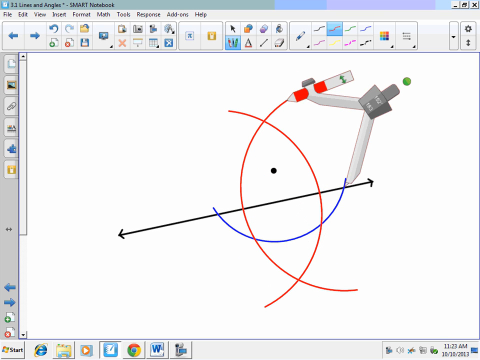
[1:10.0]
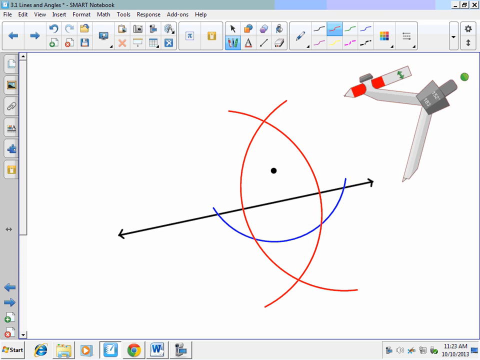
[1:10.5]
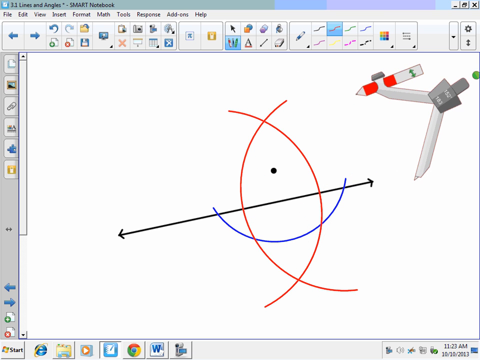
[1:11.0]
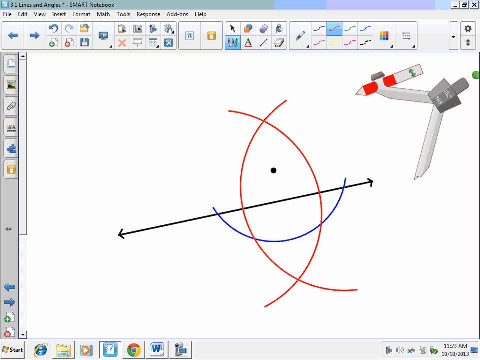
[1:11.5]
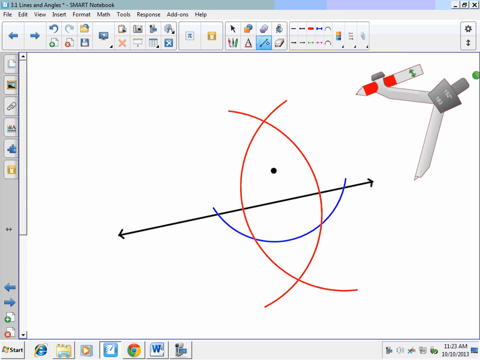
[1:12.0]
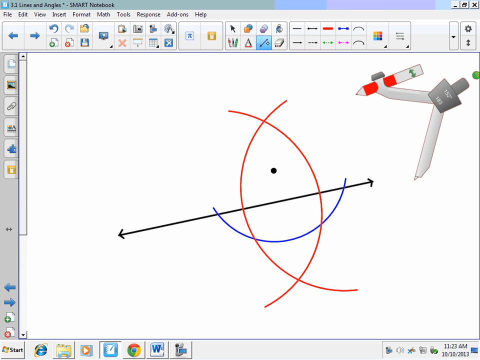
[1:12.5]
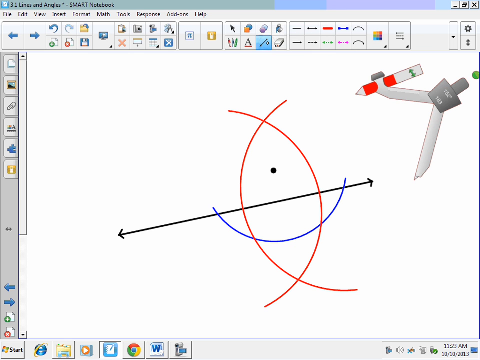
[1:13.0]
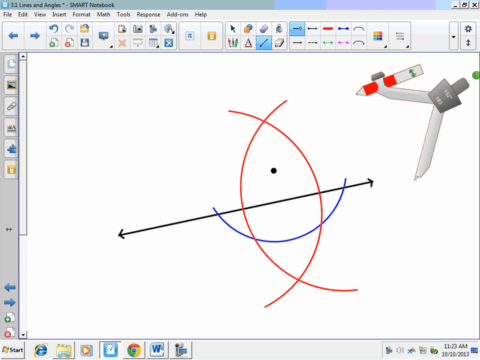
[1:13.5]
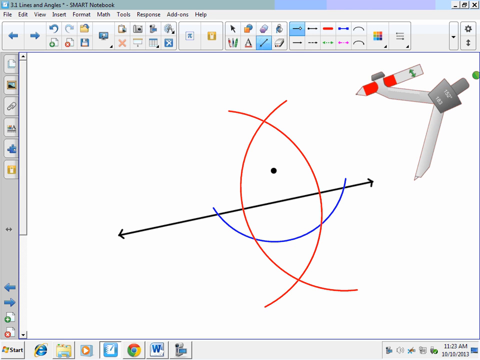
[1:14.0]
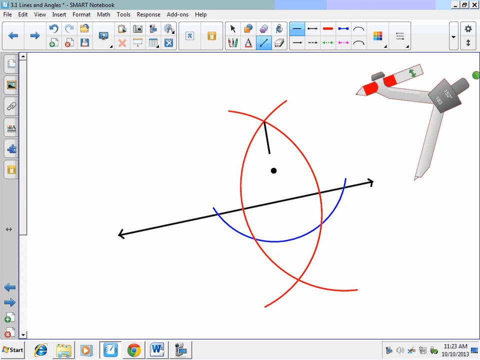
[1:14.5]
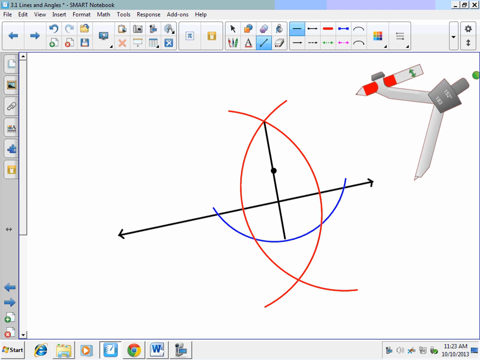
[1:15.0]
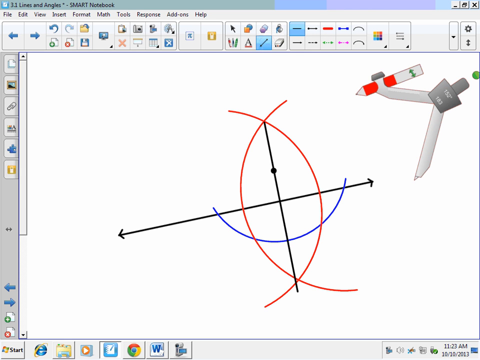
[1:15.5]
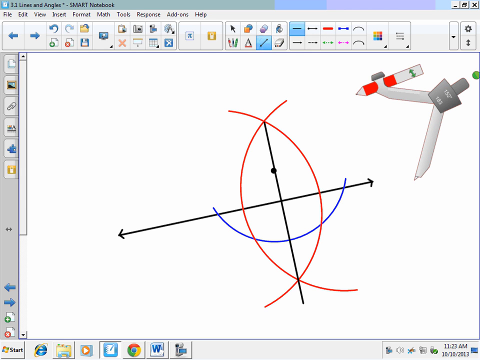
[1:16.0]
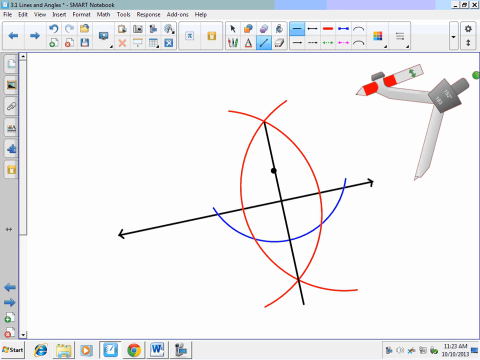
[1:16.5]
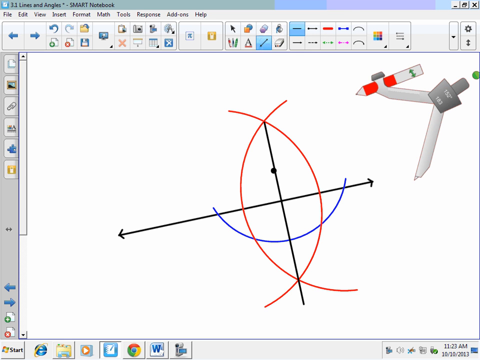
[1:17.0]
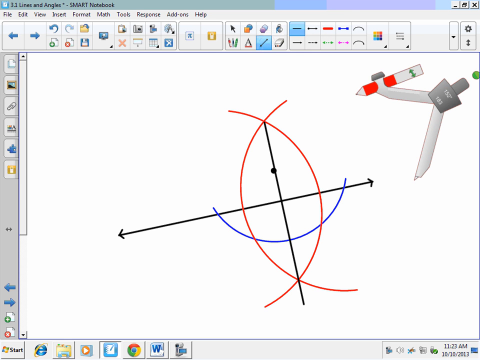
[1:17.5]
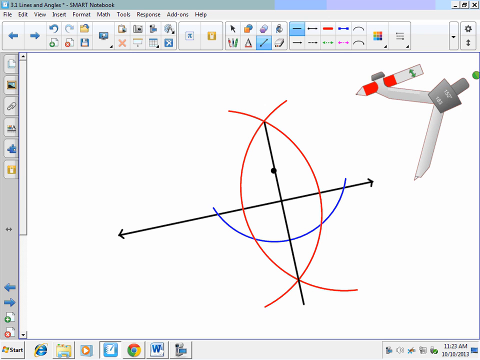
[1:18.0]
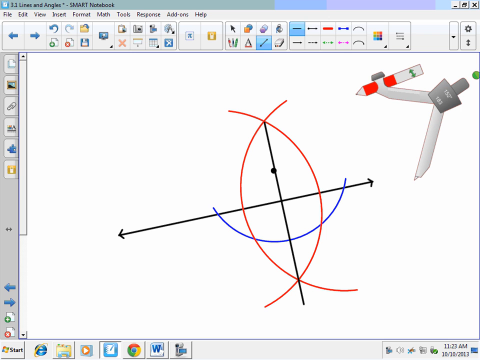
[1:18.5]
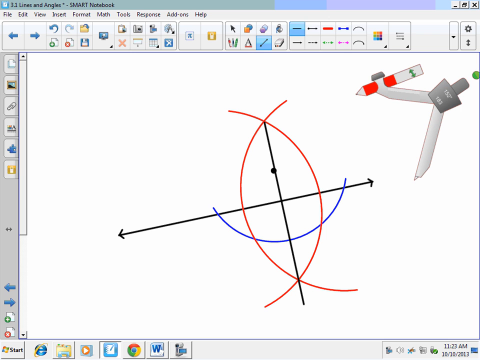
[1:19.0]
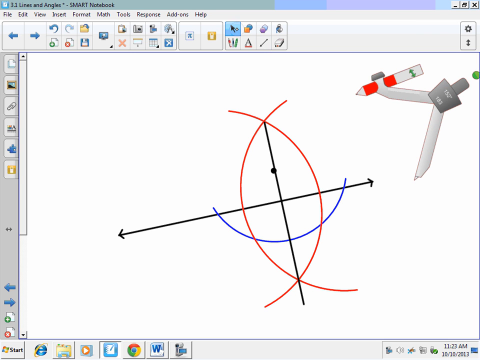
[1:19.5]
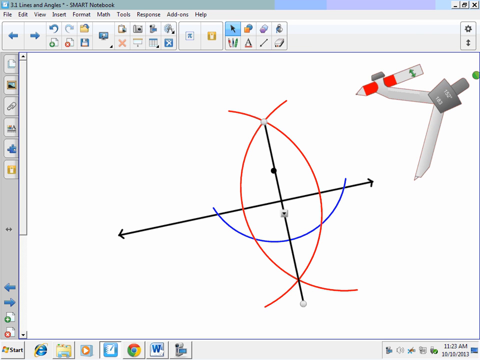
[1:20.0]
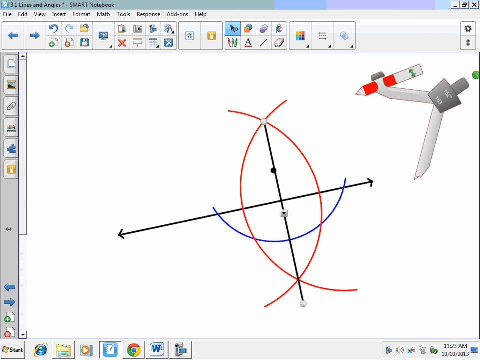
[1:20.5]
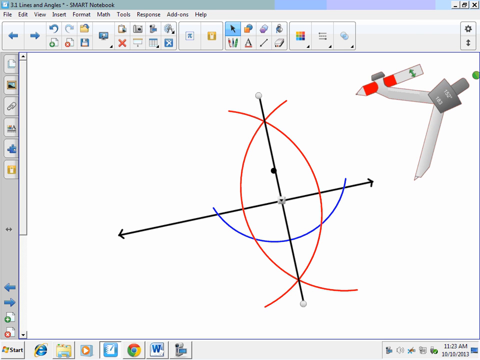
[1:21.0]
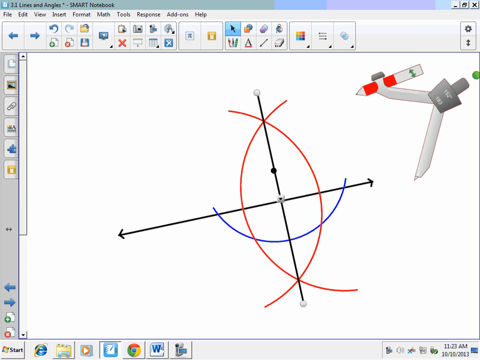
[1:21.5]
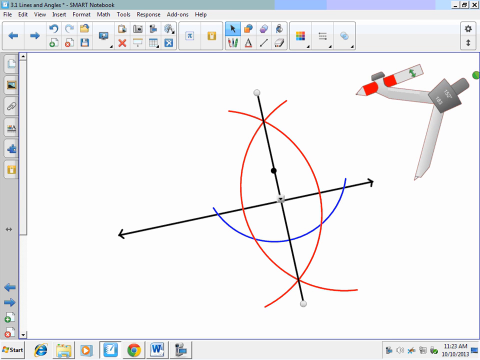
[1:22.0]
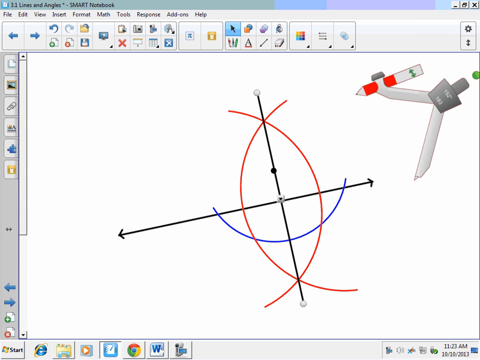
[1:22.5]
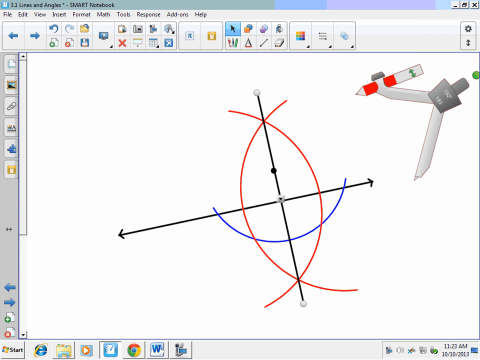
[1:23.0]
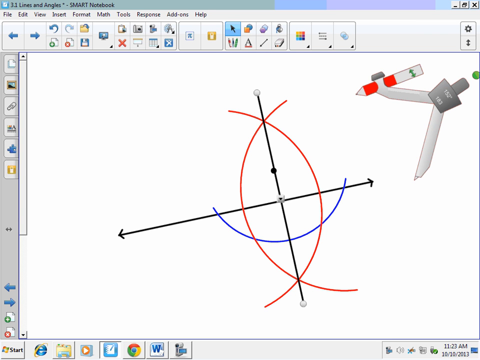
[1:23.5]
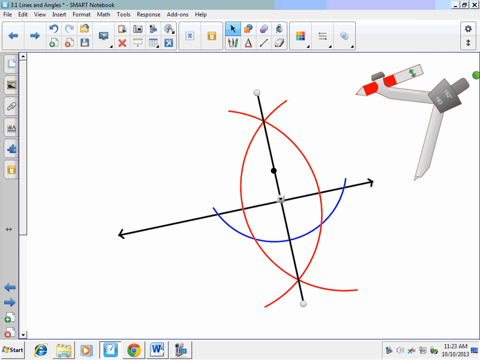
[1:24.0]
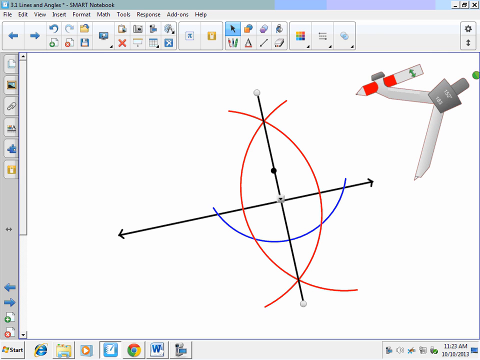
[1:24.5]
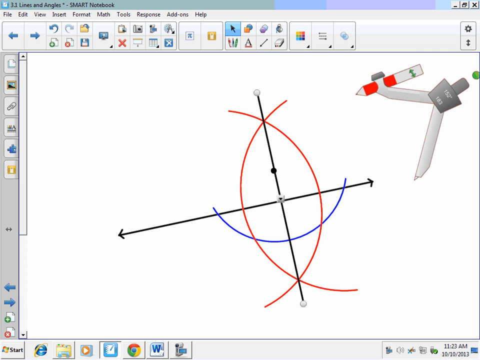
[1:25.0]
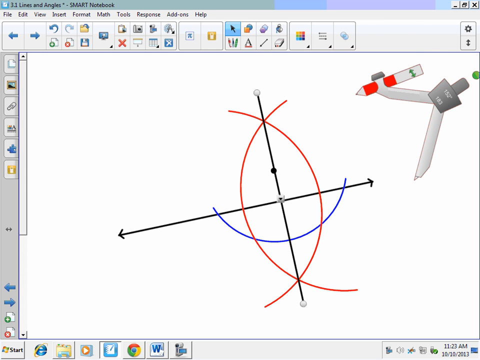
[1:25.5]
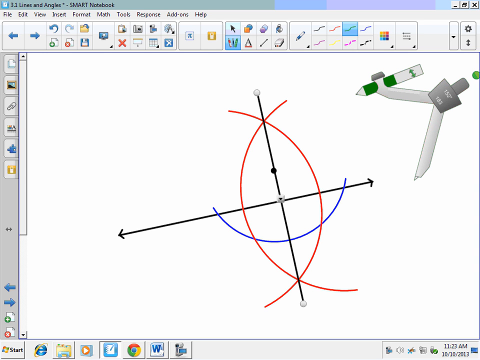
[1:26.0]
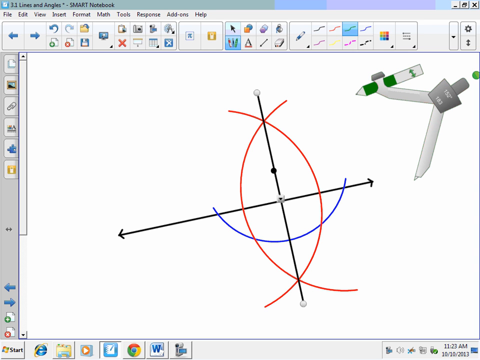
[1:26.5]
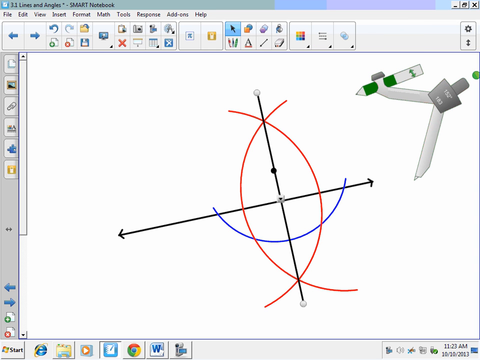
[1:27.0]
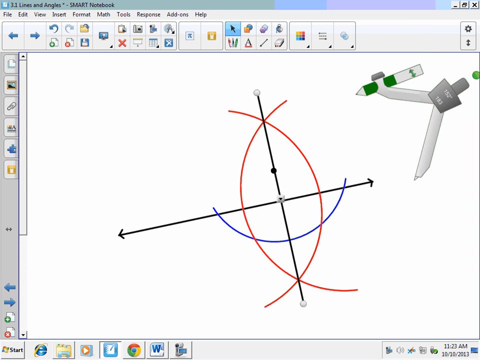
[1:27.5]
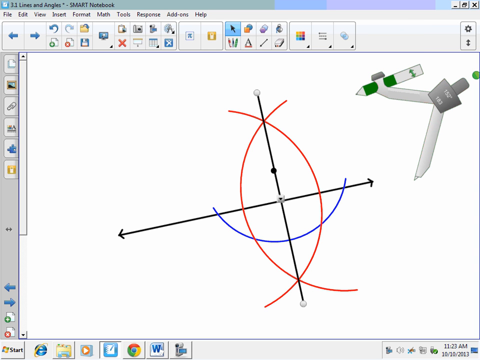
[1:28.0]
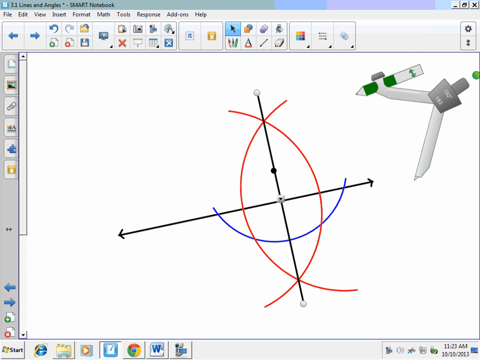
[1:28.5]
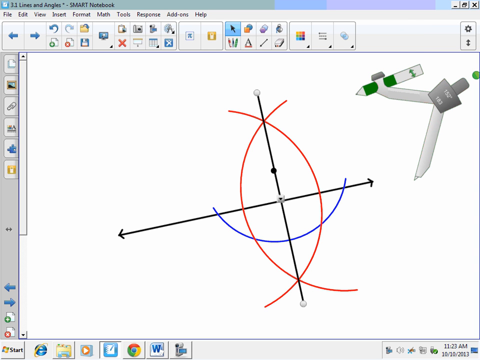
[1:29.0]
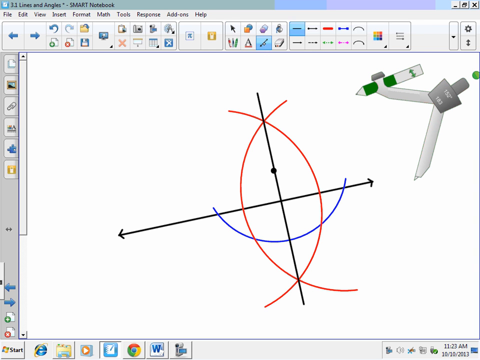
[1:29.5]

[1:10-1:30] At the top, where there are options for which lines to choose, a red squiggly line is shown. The protractor moves back to the end of the page and the line comes back. The line has both the blue semicircle and the red circles, and the protractor moves away from the red lines after they have been drawn. In the screen icon, a different option to make changes has been selected. A line kind of starts where the two semicircles intersect and goes straight to the other point where the two semicircles intersect. The line is completely straight and also cuts through the dot that was on the white page at the beginning. The line is then extended above the intersection points. The protractor remains moved to the side. A red pencil is shown at first, then it switches to a green pencil, and then back to a red pencil.